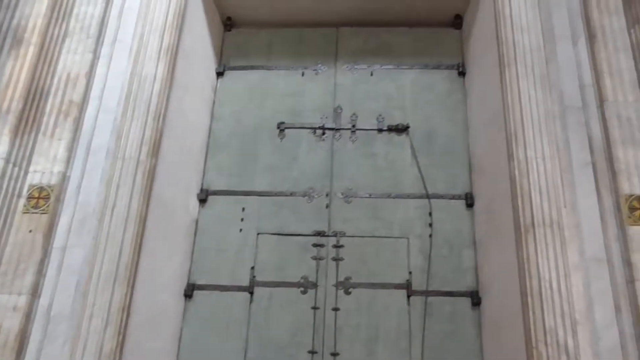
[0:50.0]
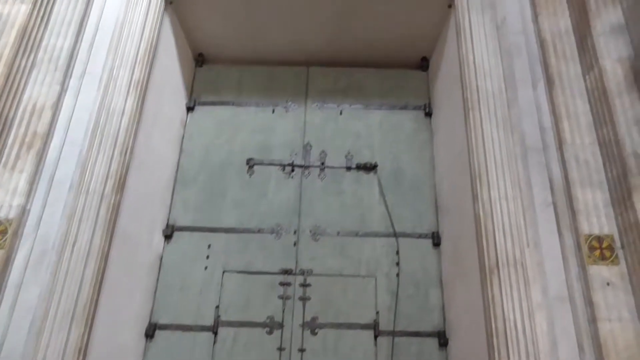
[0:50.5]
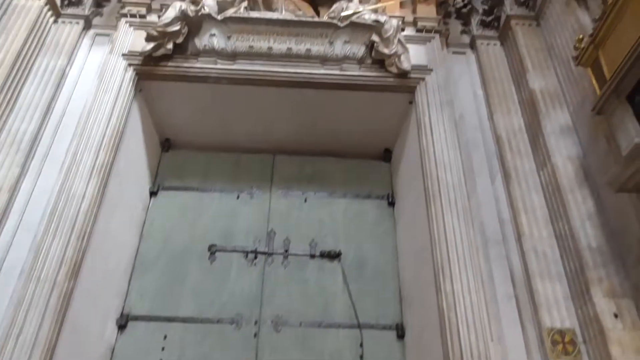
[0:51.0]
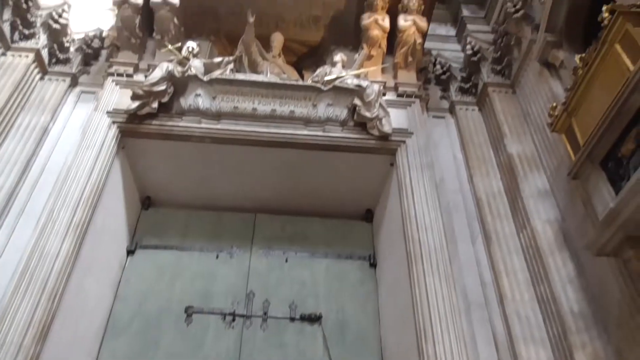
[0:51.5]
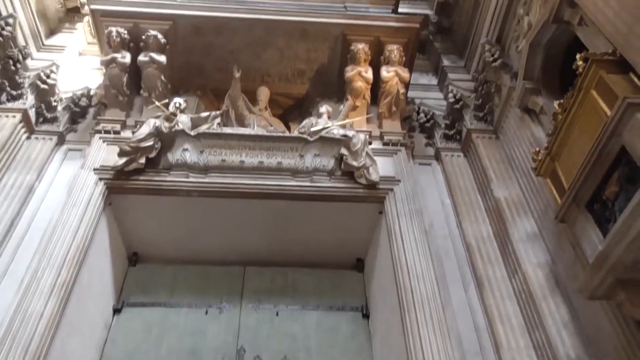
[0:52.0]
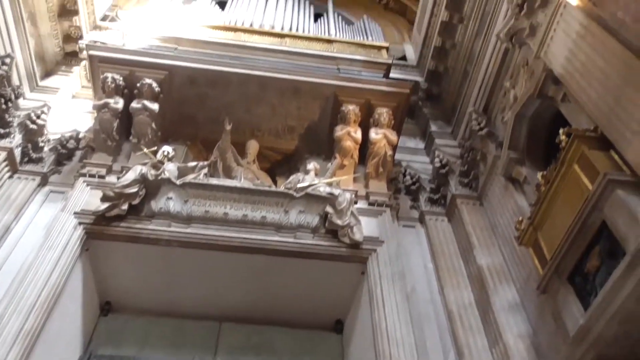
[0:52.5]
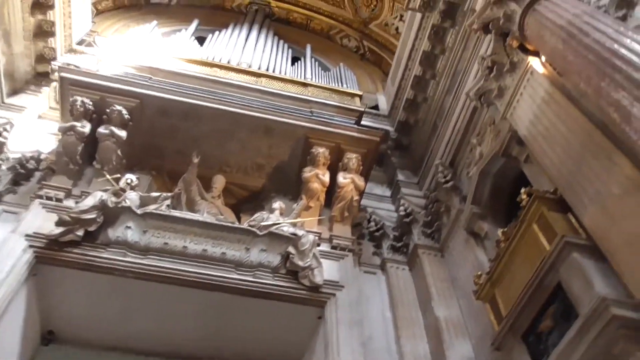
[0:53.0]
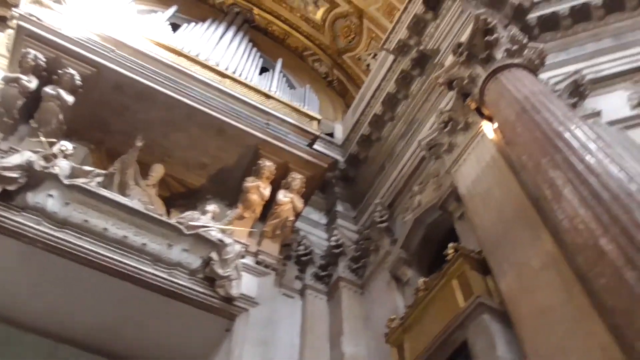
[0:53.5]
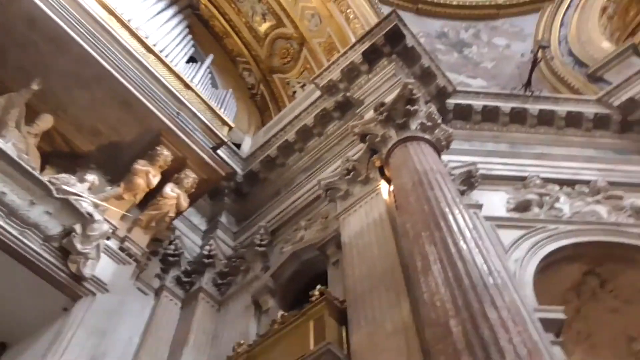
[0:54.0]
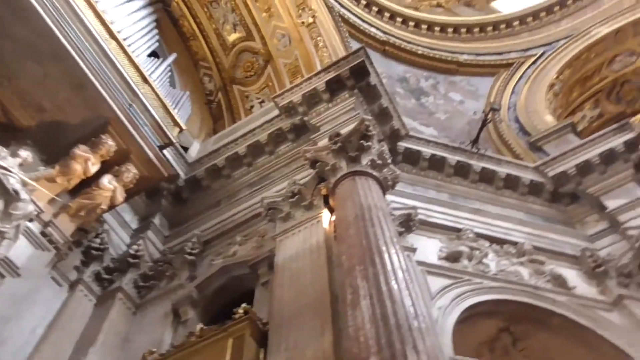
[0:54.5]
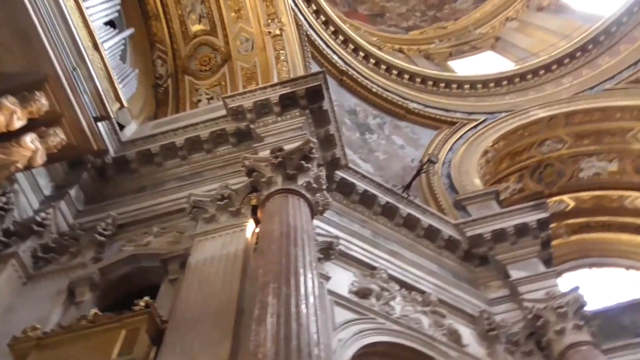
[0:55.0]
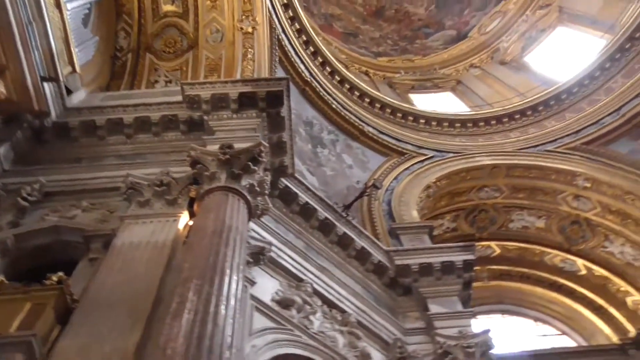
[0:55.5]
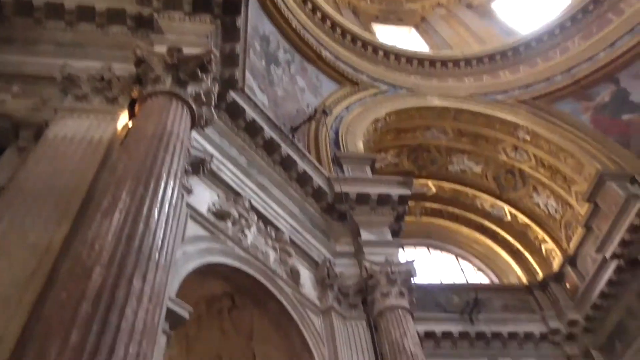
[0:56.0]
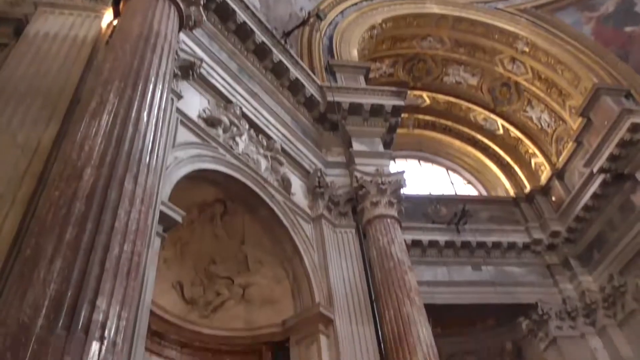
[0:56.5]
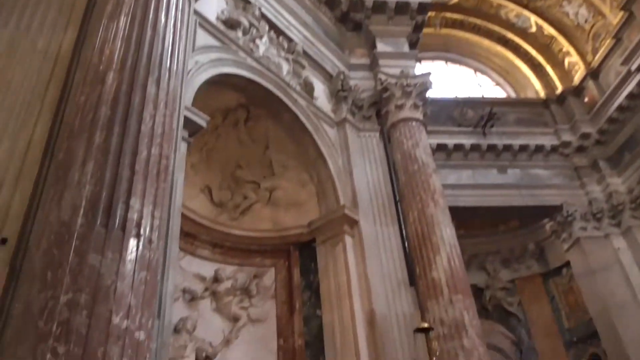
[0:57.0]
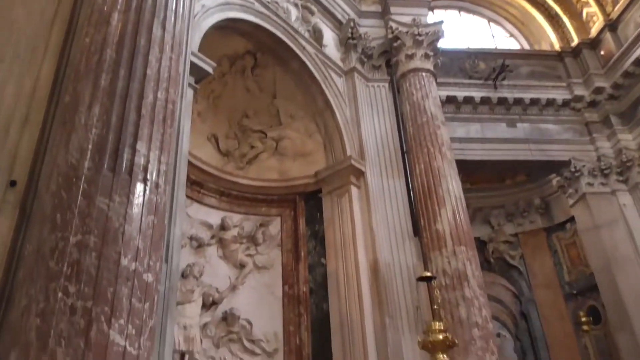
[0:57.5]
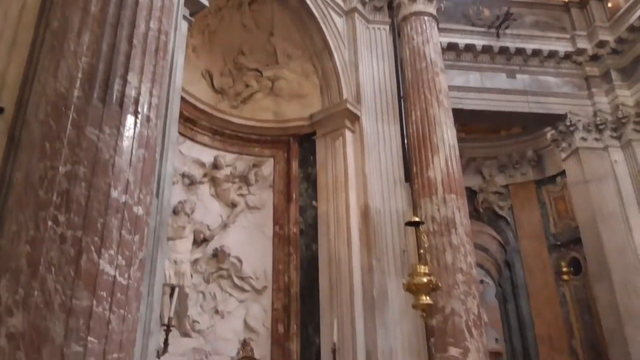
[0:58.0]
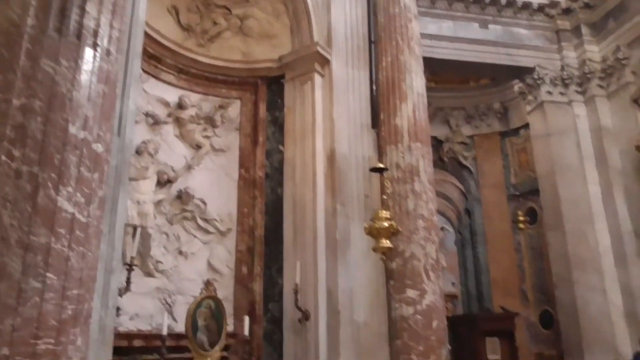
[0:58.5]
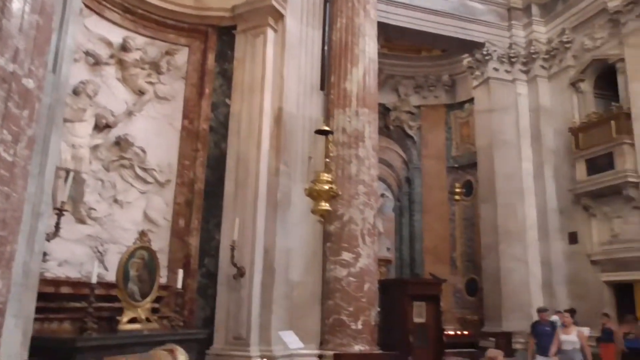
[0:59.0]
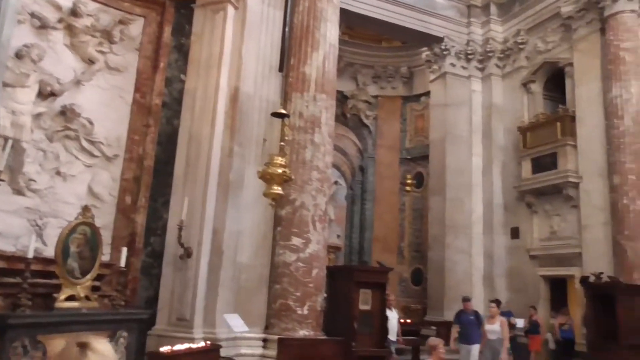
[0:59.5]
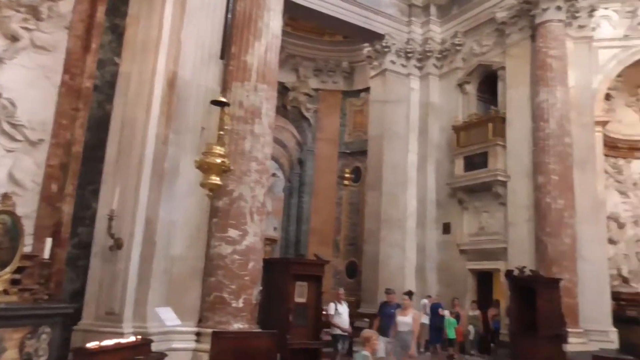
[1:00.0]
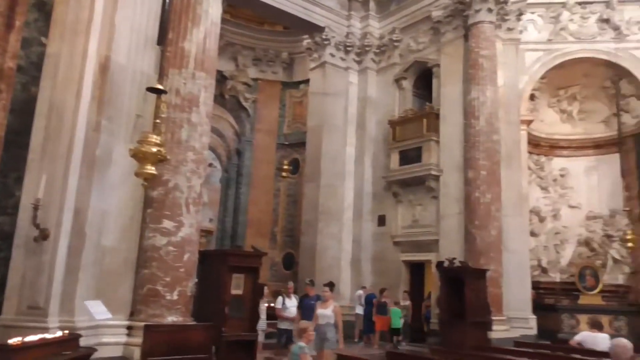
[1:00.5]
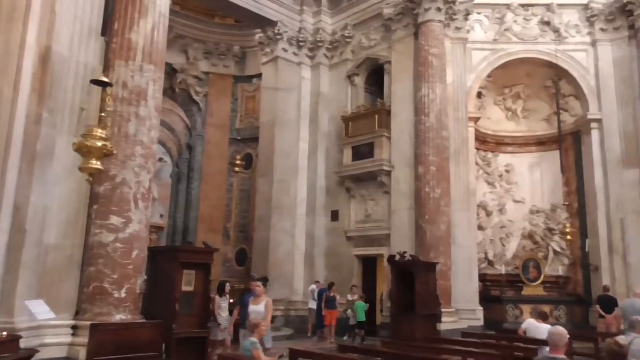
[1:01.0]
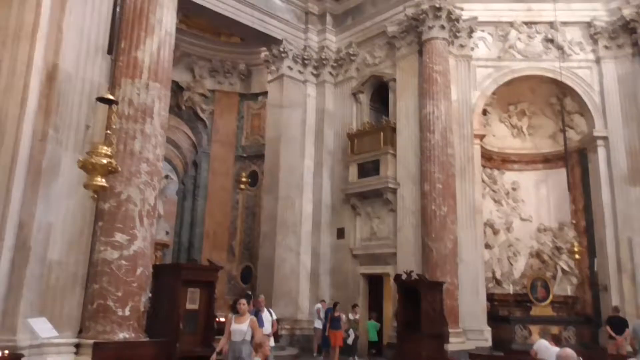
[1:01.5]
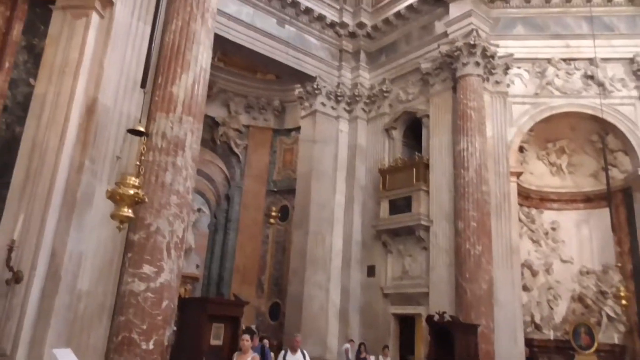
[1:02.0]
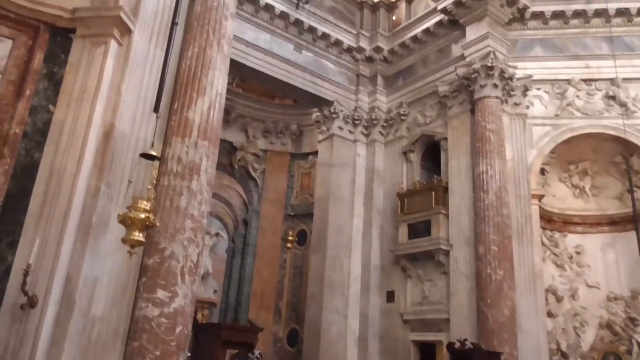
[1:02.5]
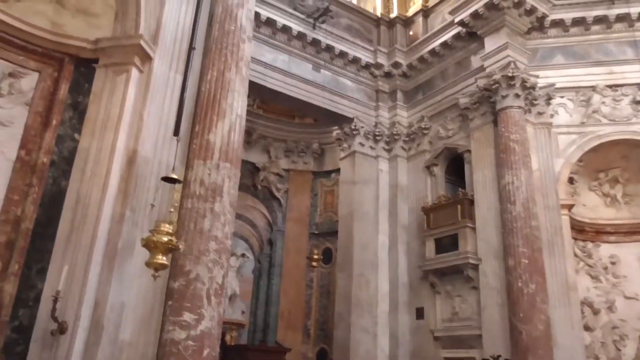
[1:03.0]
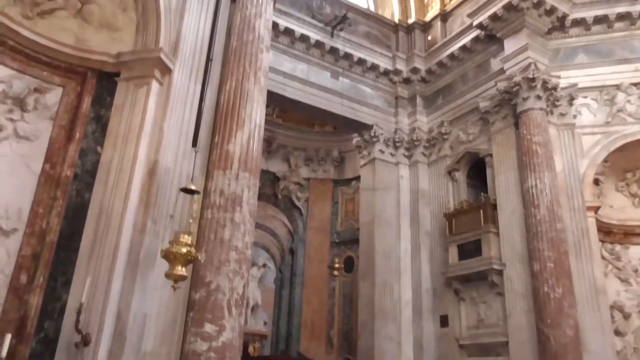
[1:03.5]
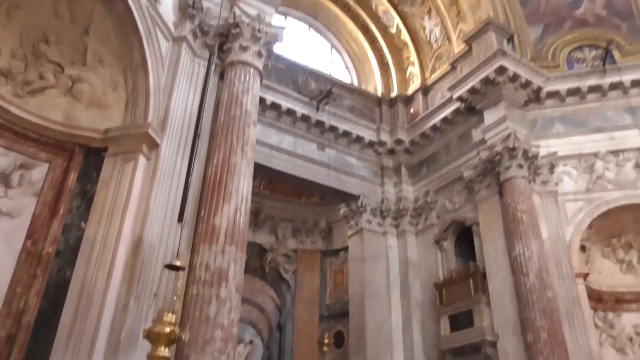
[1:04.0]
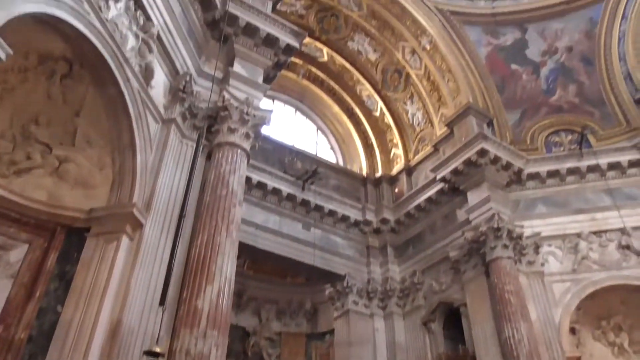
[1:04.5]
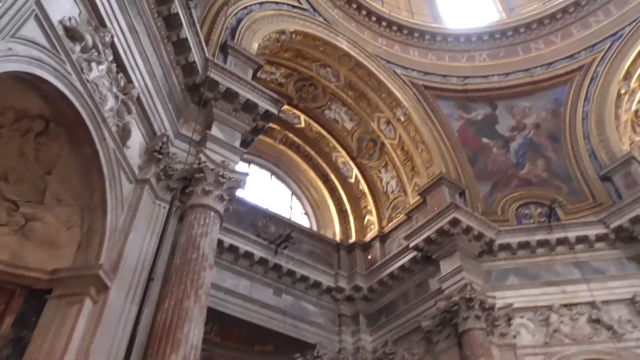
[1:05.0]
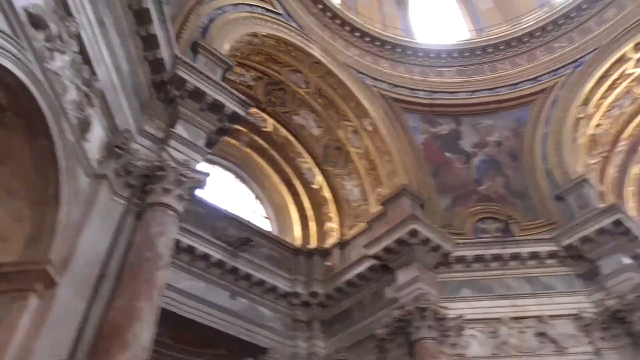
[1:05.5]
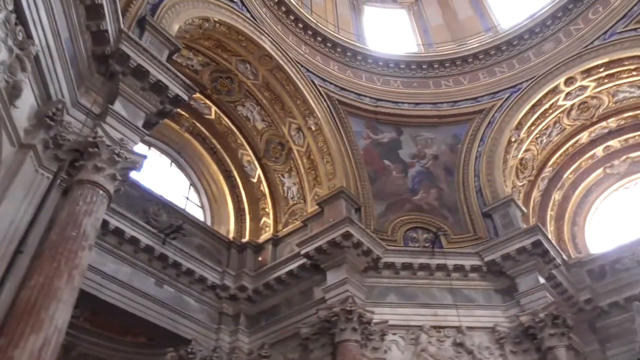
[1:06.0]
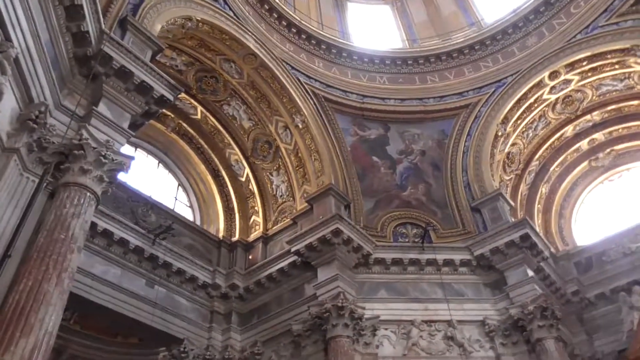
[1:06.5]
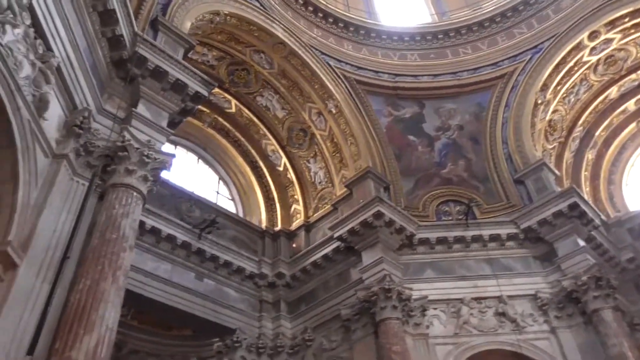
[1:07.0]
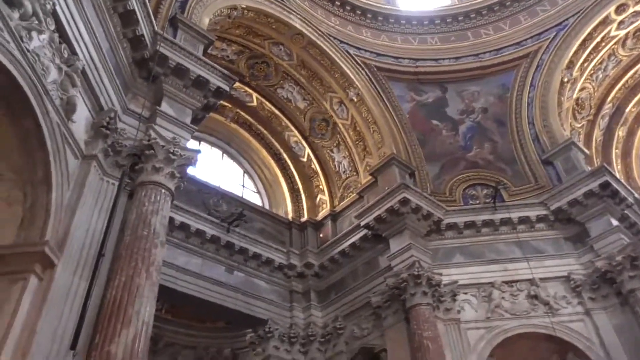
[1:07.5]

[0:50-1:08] The scene appears to be the inside of a tourist destination. It opens with a view of a large door, and then the camera pans to many very ornate carvings. They are statues, some with a somewhat Greek look, including carved, partially clothed women and a man in robes with his arm outstretched. Something possibly in Latin appears to be etched on a balcony, and stone figures sit on the side of that balcony. There is very ornate silver and gold scrollwork, columns, and a partial dome view of the ceiling with paintings up top. The camera continues to pan down, showing more Renaissance-looking figures and oversized carvings of Greek or Renaissance-looking figures. It pans around the ornate interior, showing gold fixtures mounted on the sides of the columns, many balconies, dental molding and medieval-looking paintings. The stone is in natural colors of grays, tans and some oranges, and bronze coloring is used as well.